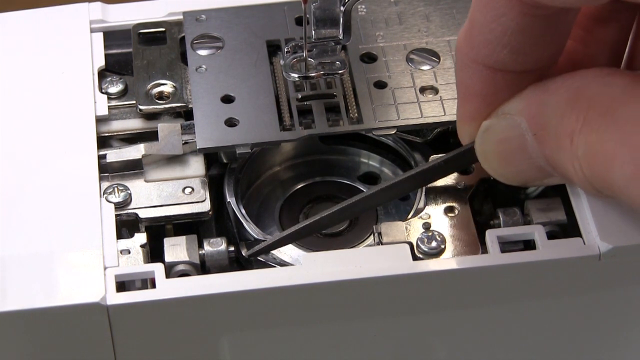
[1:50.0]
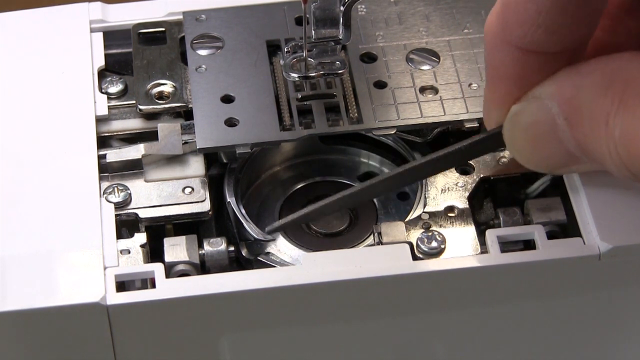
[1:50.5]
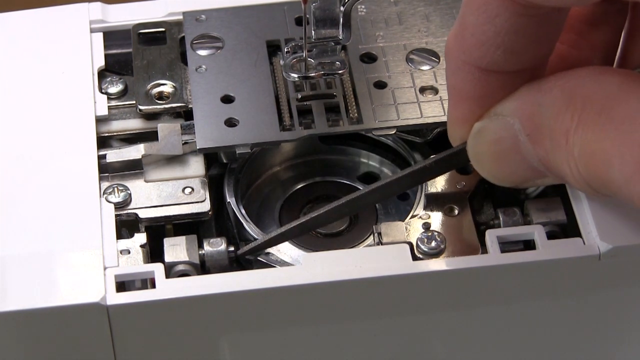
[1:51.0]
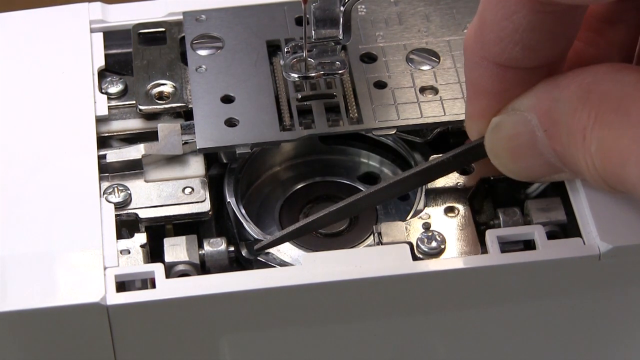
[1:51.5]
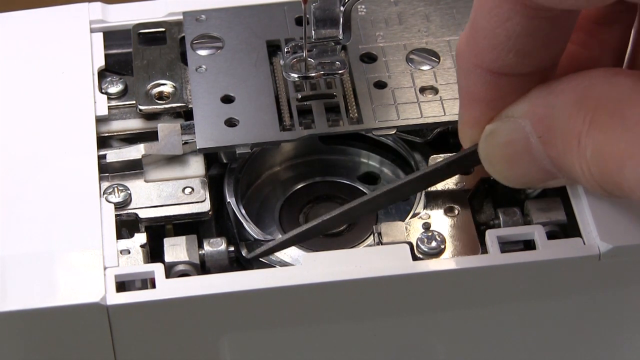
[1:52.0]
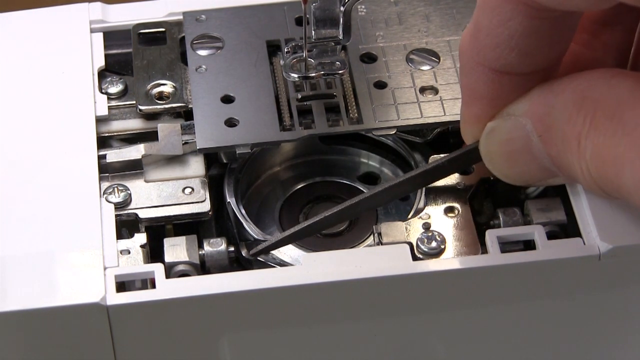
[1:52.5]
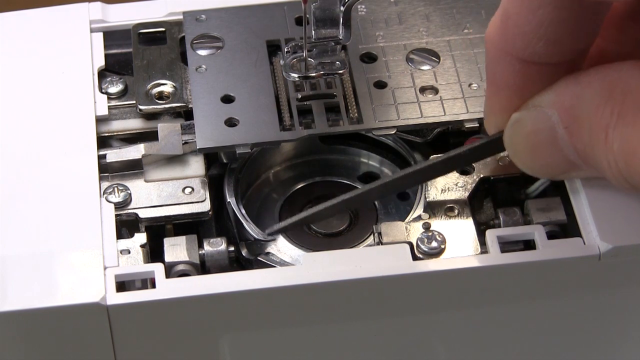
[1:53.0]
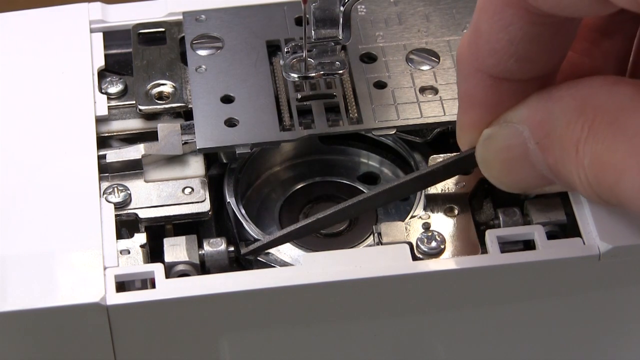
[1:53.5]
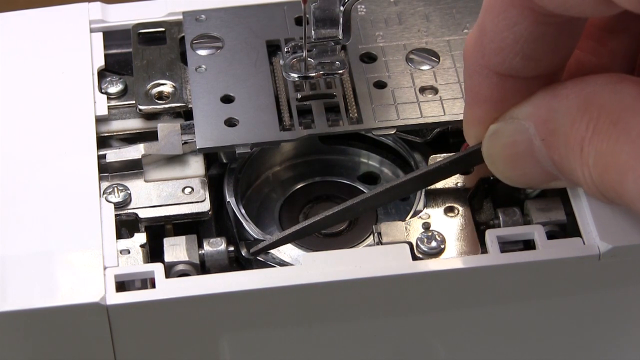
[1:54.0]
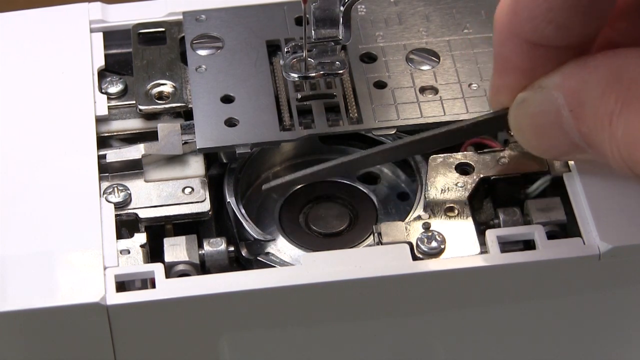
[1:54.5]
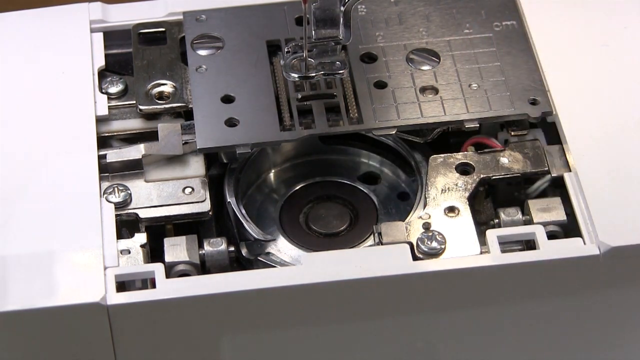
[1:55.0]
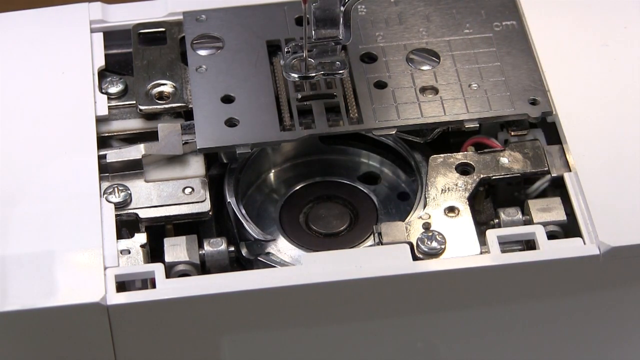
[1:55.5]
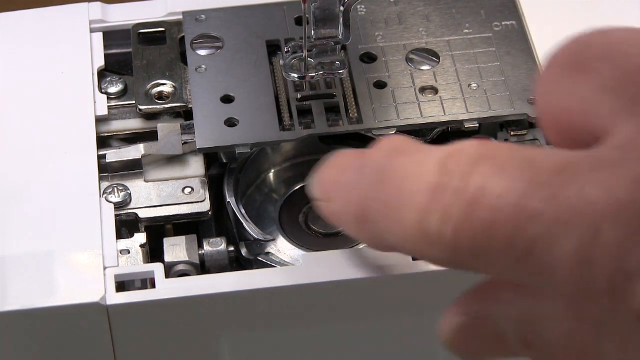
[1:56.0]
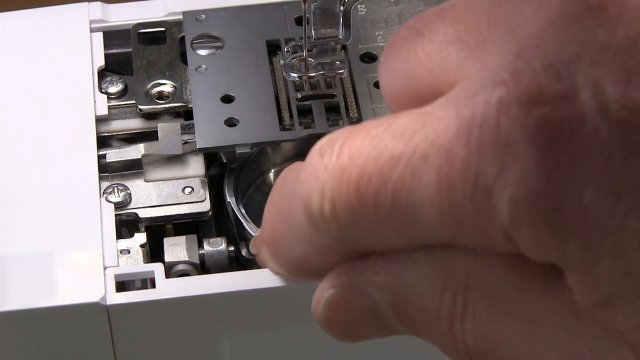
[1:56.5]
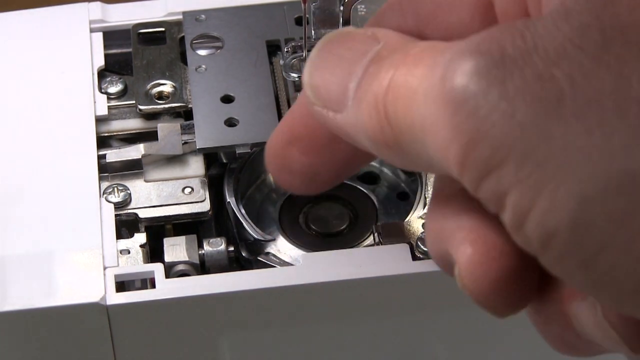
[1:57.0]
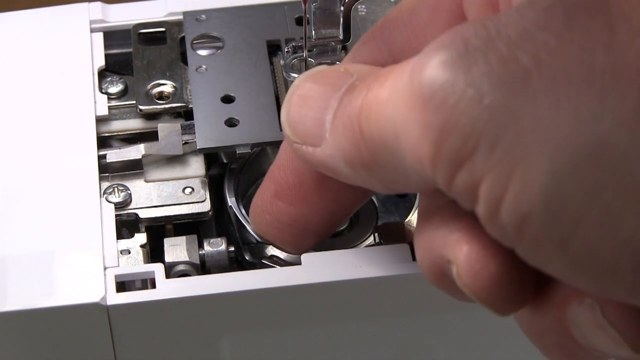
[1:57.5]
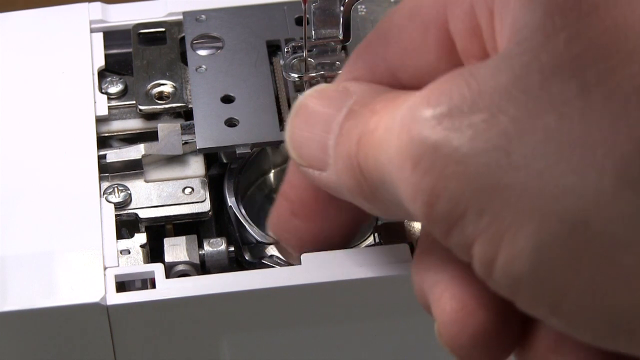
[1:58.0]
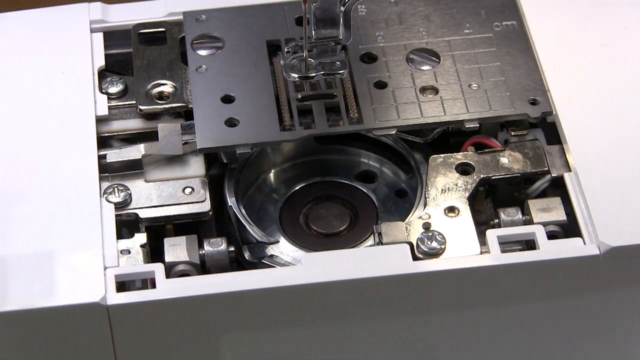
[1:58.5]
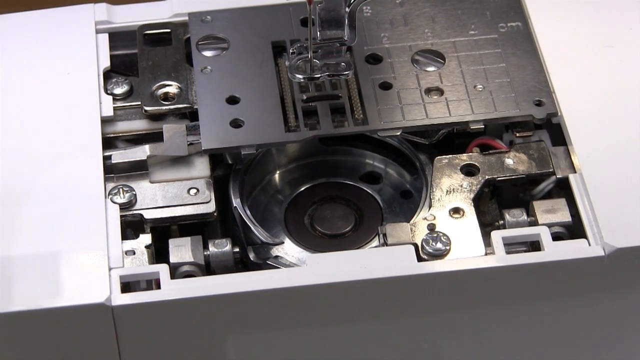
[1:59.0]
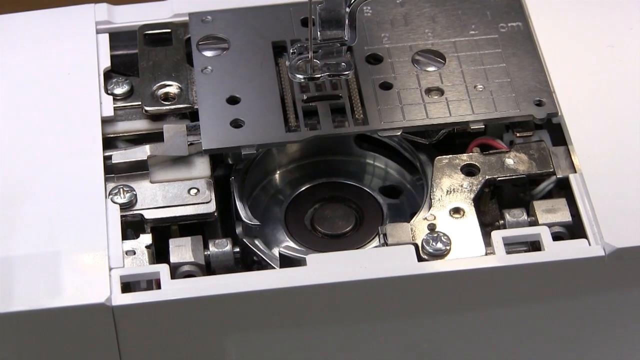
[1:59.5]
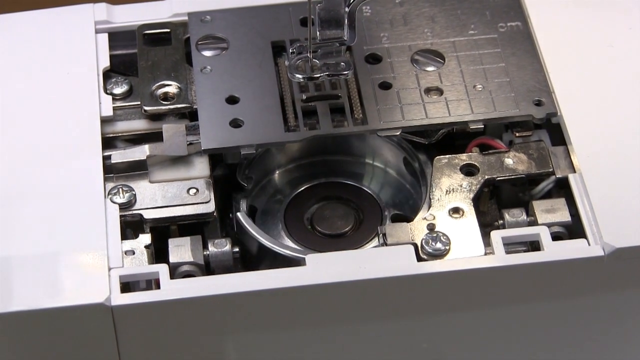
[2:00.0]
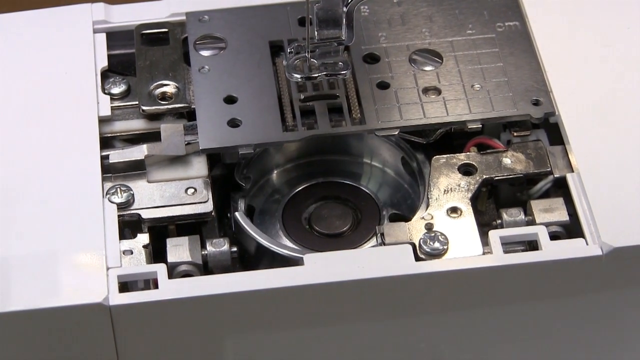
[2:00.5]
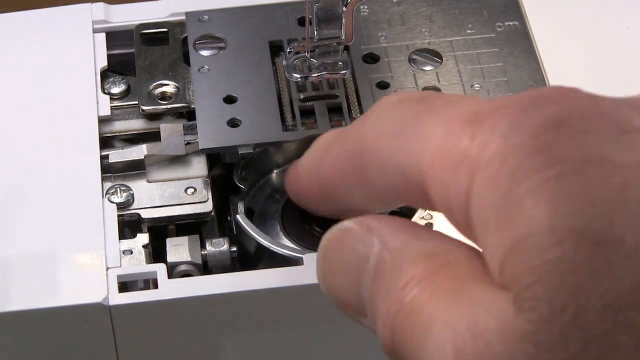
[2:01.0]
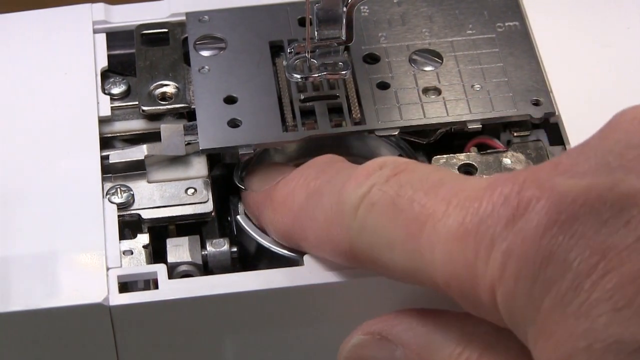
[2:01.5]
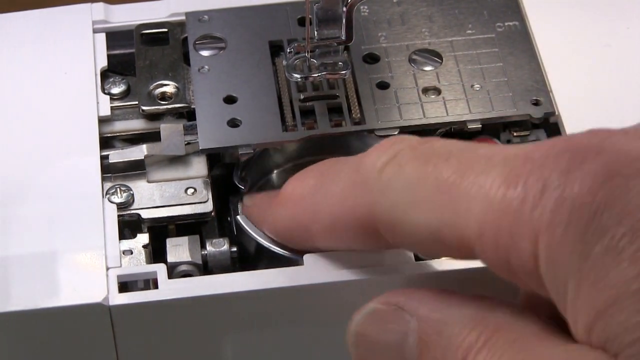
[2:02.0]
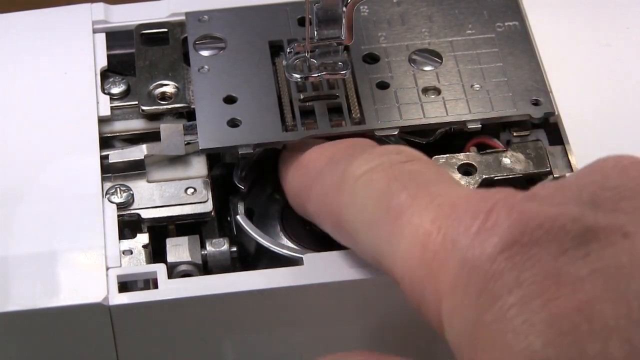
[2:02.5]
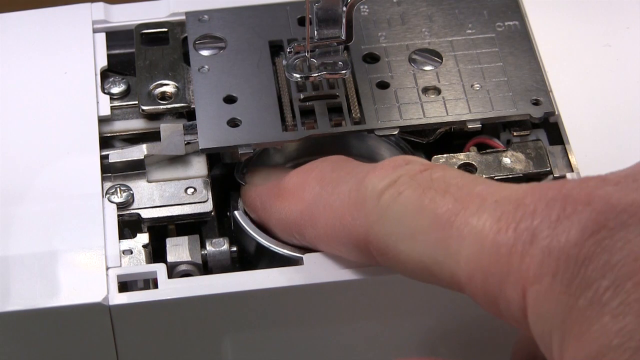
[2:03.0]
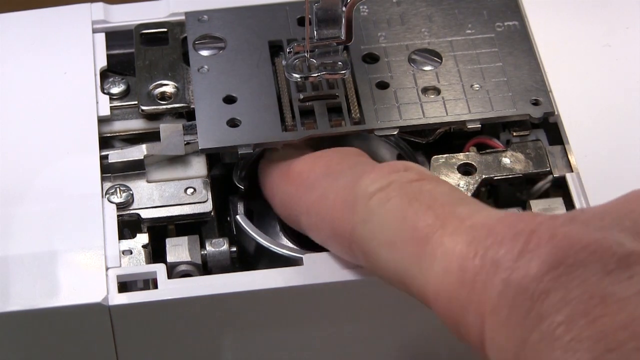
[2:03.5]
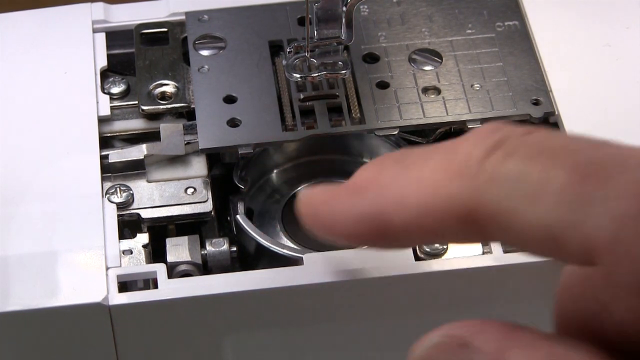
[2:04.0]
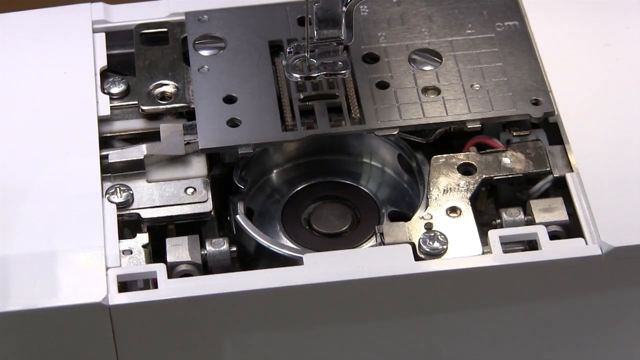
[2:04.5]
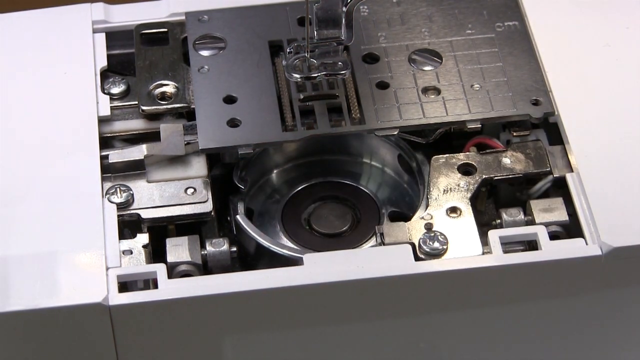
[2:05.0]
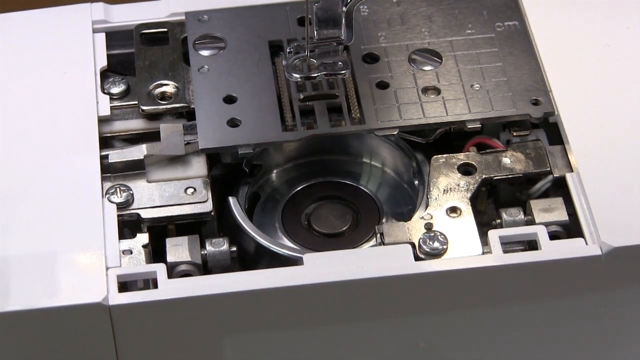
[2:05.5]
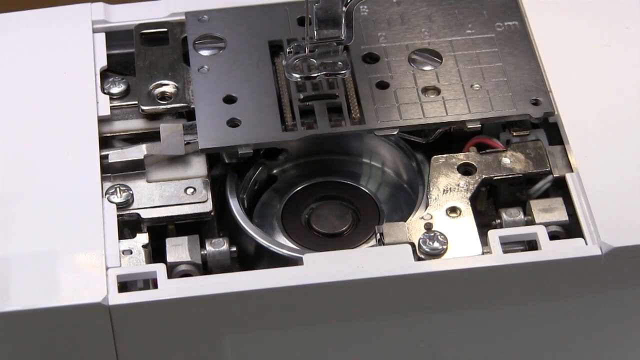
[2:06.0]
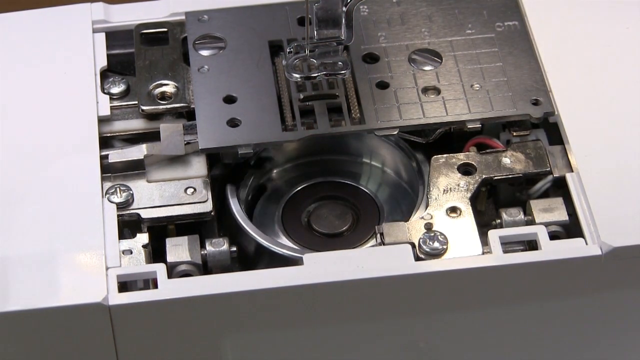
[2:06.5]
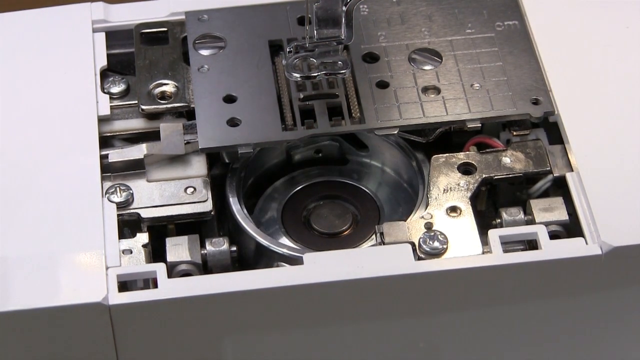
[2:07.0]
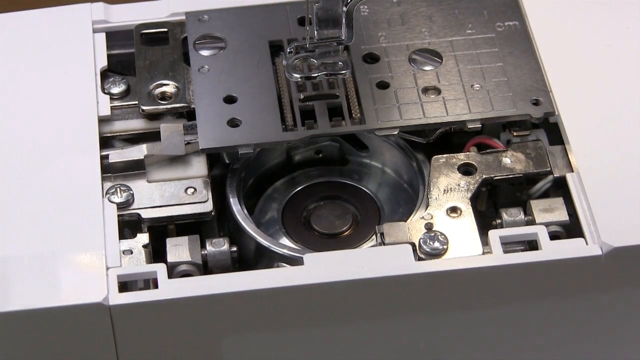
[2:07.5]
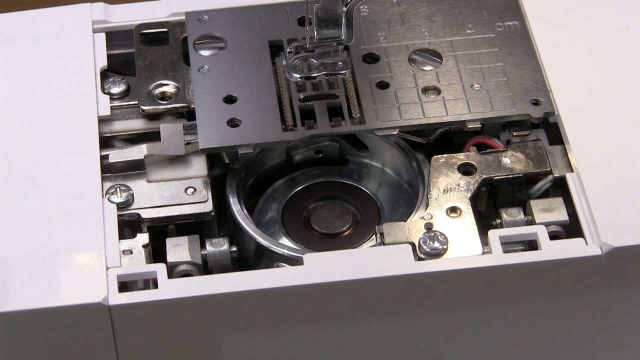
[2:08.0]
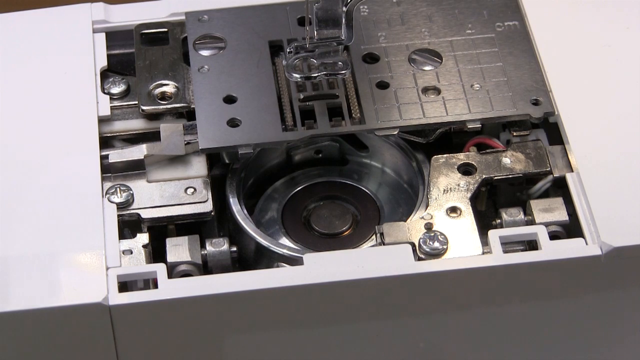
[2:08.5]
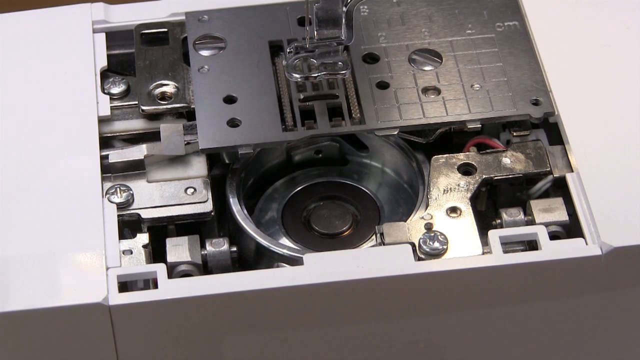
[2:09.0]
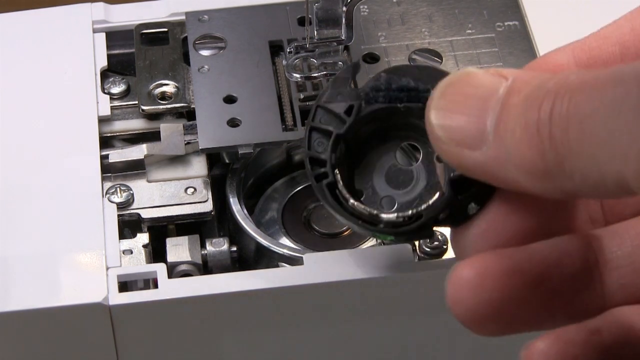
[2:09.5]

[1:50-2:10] On top of the sewing machine is the metal part where the needle goes through, and this time the needle is actually going through the hole, toward the metal plate right beneath it; the other plastic parts of the machine are also visible. The man is still touching the bobbin with his metal stick, then again touches it slowly with his finger and gets it to spin a little more, making it go around. At the end, he grabs one of the pieces he took off the bobbin earlier, probably to install it again.